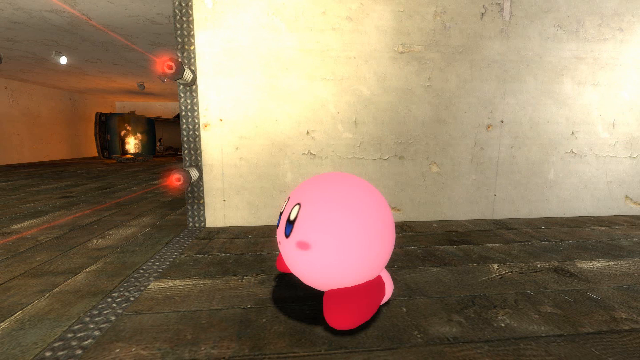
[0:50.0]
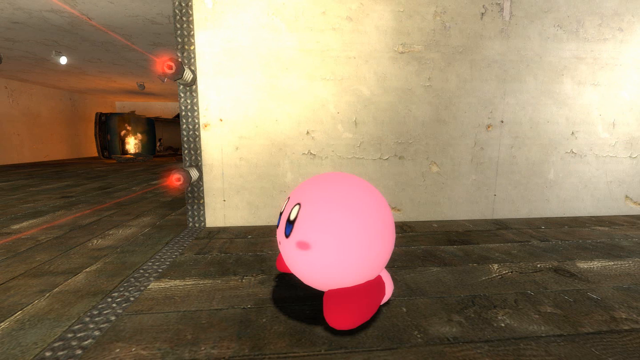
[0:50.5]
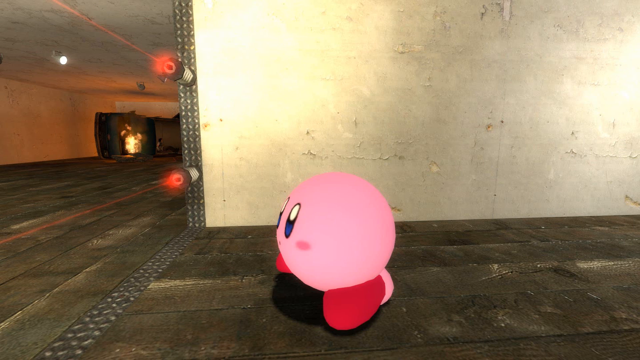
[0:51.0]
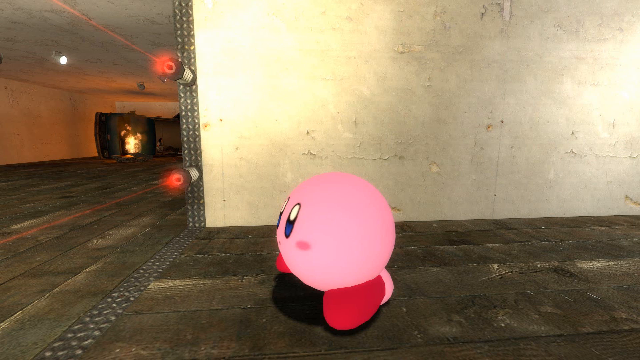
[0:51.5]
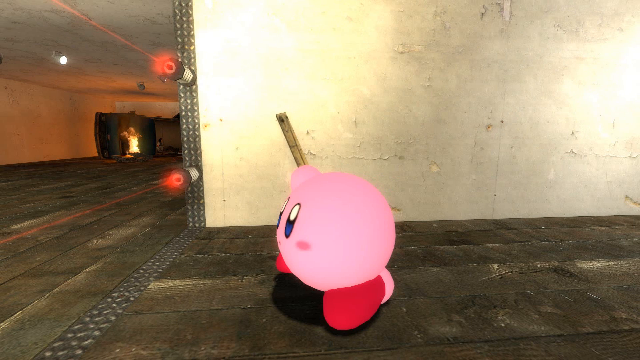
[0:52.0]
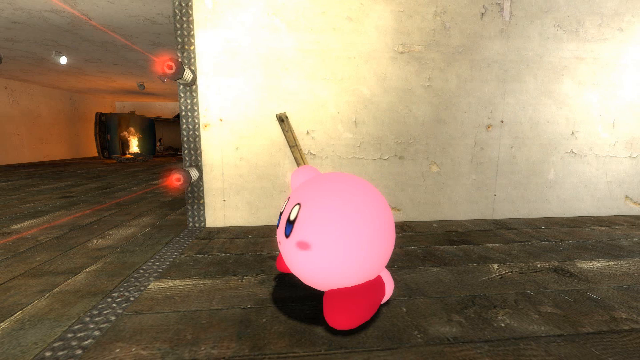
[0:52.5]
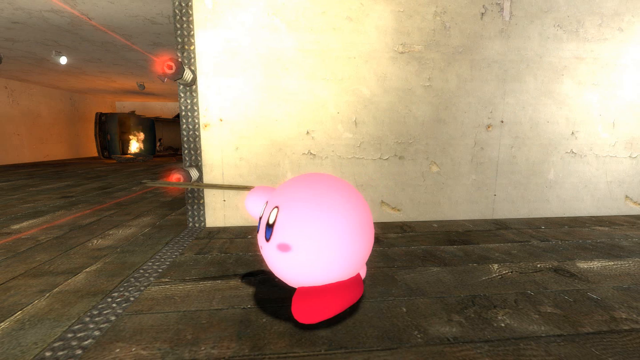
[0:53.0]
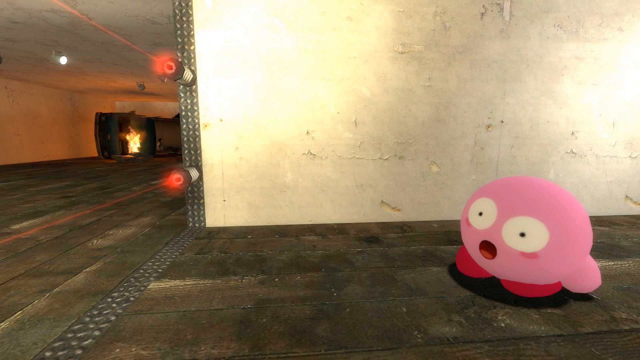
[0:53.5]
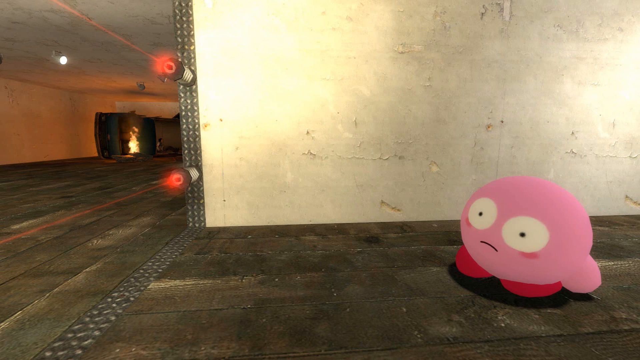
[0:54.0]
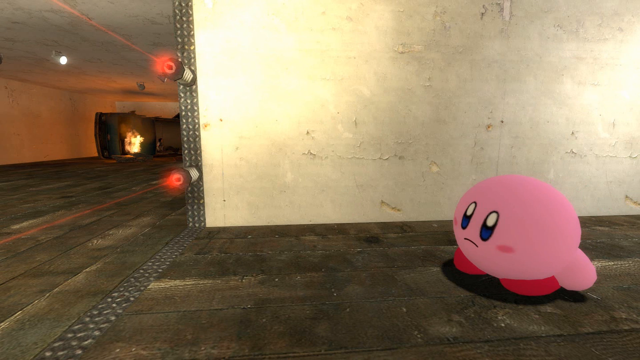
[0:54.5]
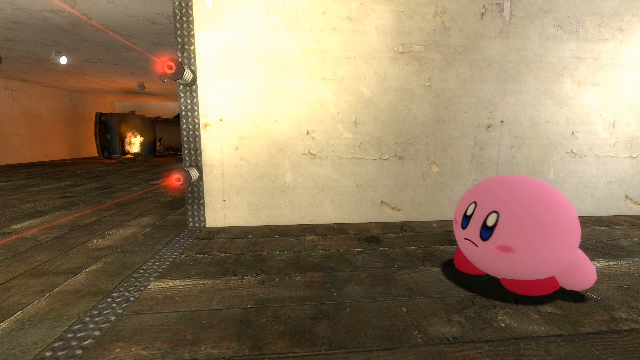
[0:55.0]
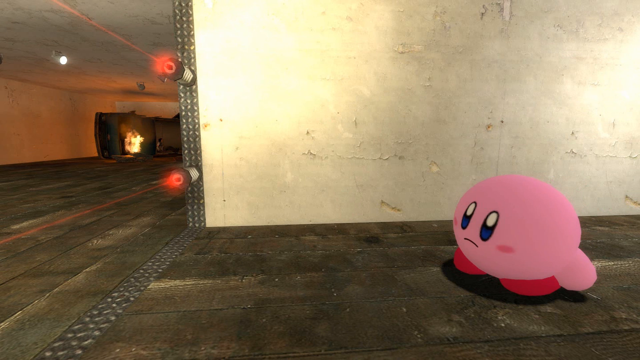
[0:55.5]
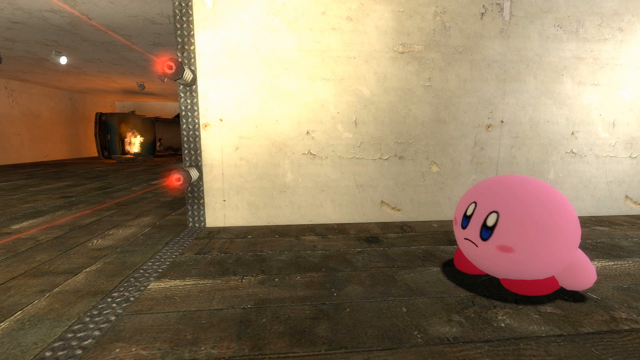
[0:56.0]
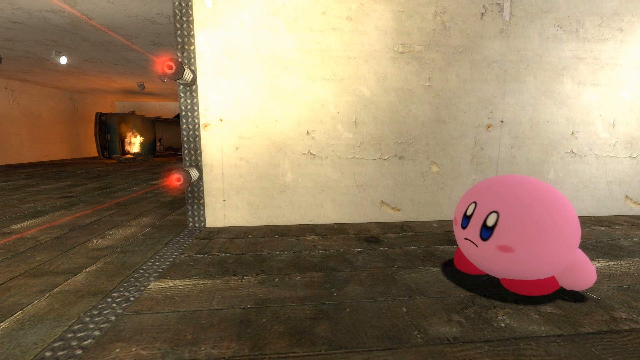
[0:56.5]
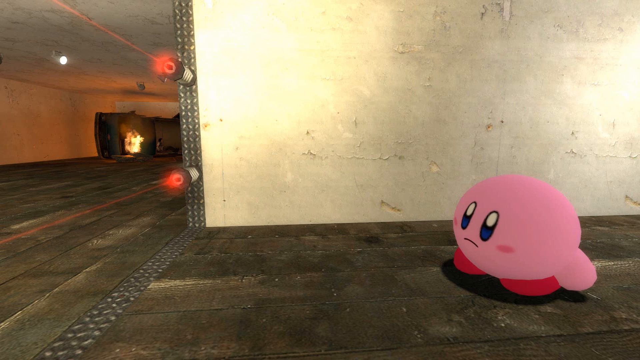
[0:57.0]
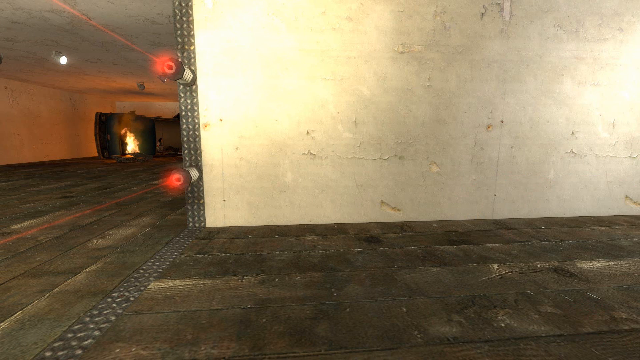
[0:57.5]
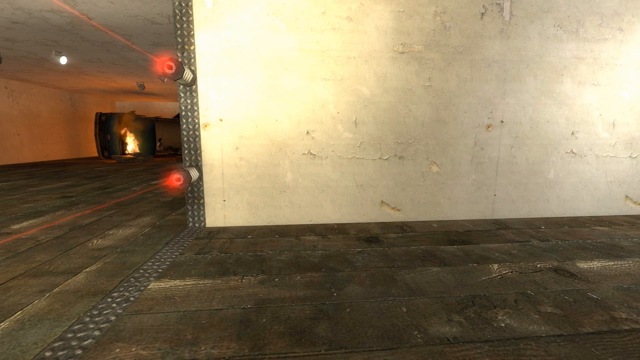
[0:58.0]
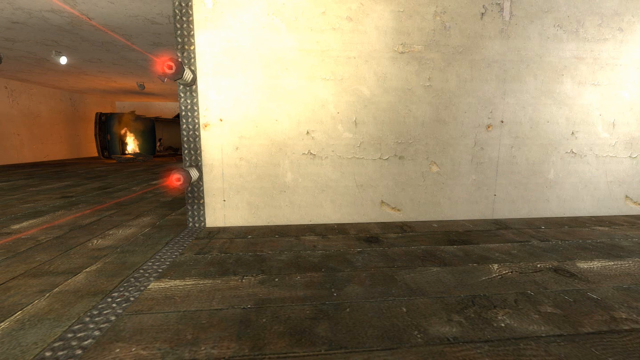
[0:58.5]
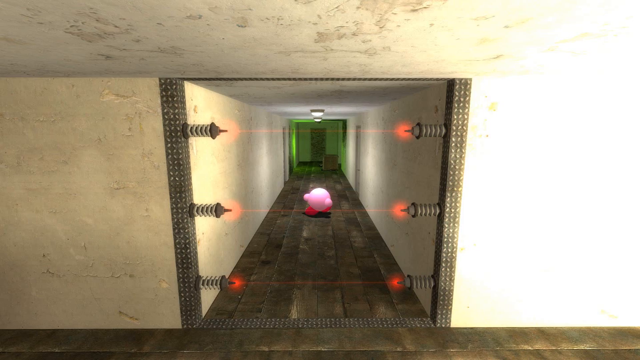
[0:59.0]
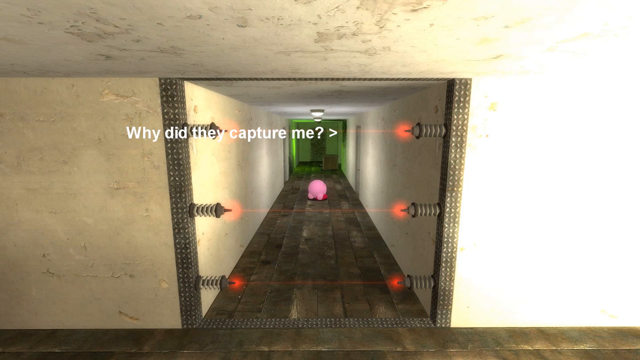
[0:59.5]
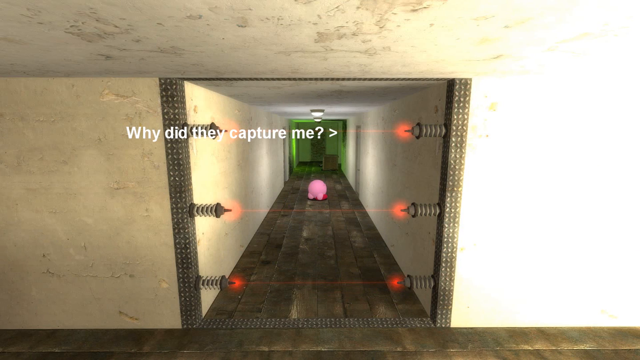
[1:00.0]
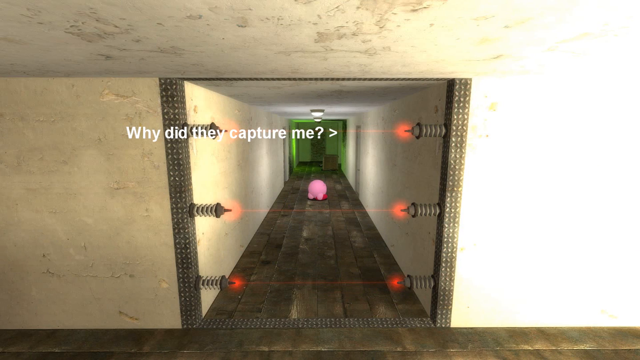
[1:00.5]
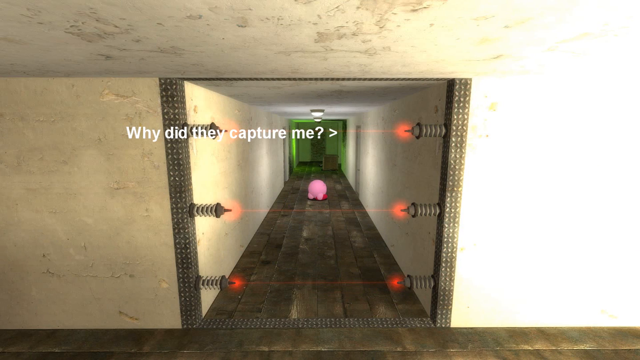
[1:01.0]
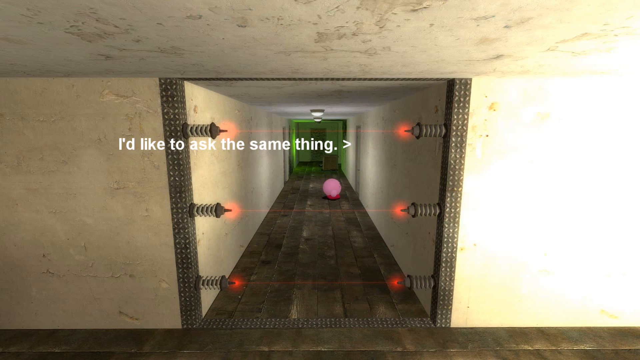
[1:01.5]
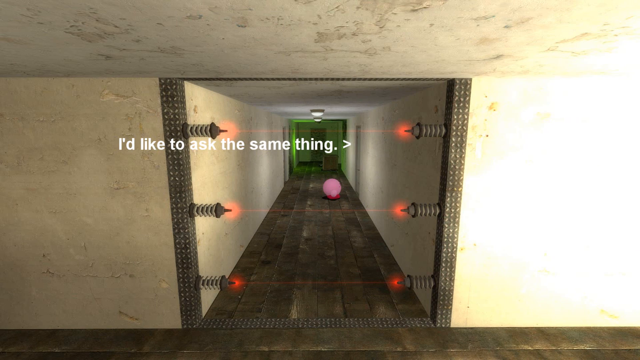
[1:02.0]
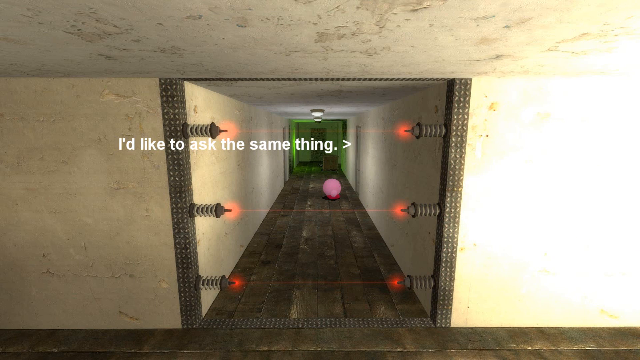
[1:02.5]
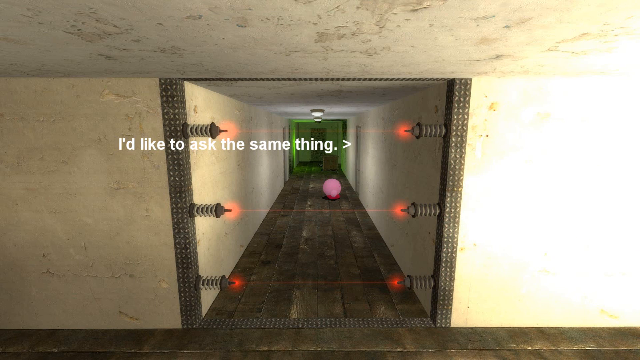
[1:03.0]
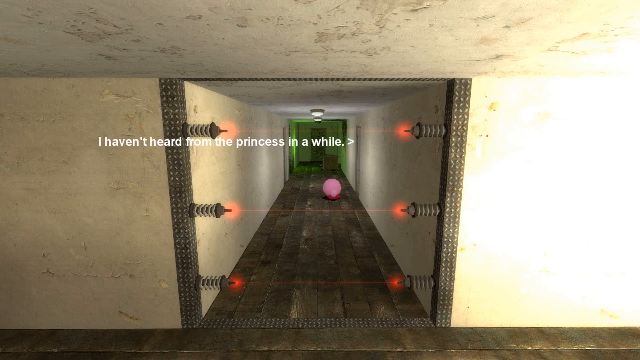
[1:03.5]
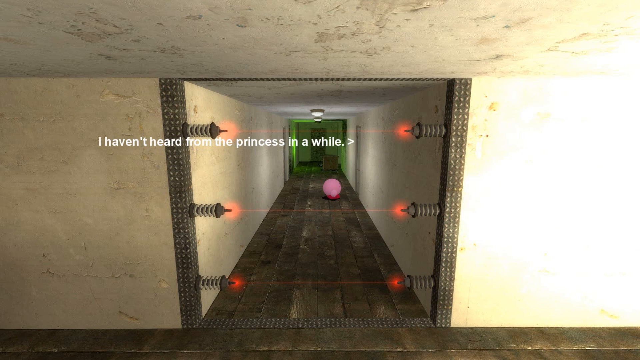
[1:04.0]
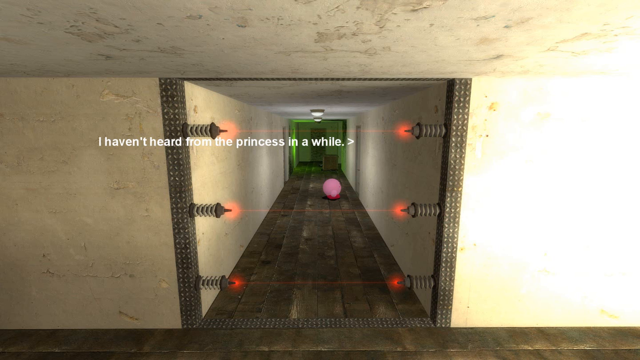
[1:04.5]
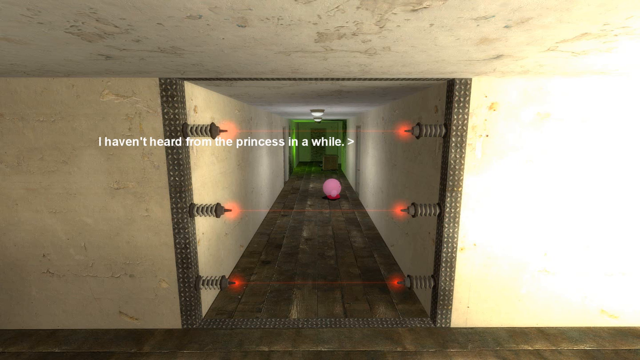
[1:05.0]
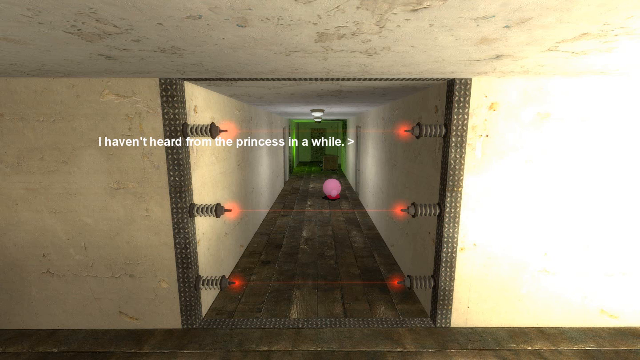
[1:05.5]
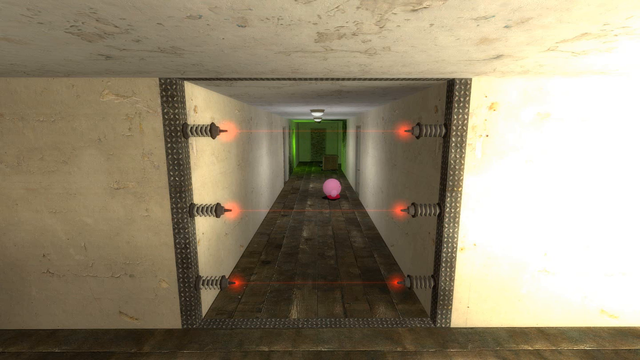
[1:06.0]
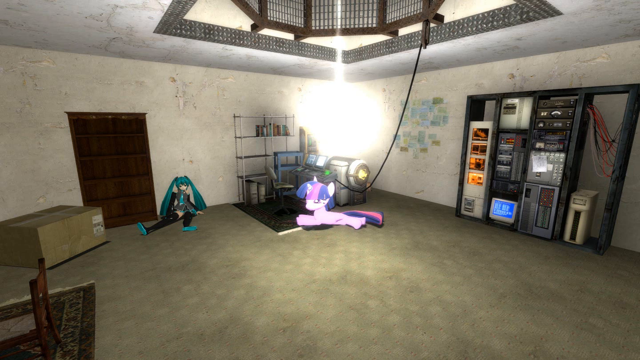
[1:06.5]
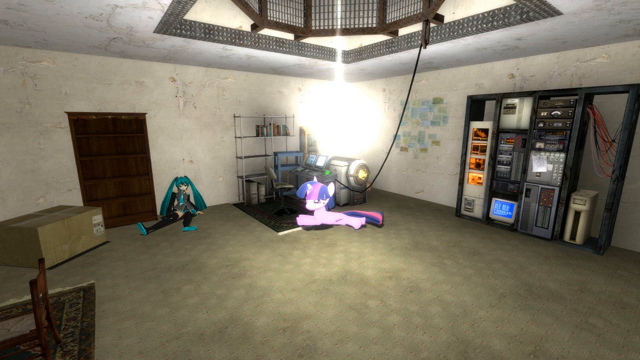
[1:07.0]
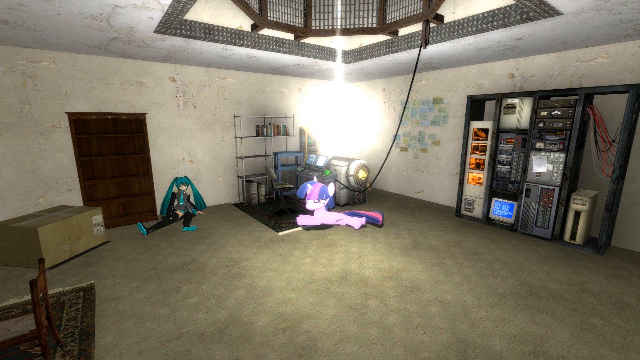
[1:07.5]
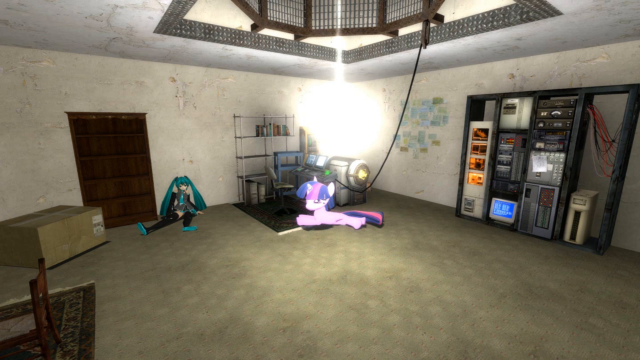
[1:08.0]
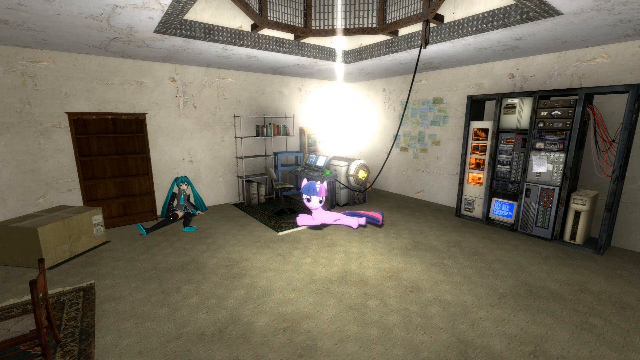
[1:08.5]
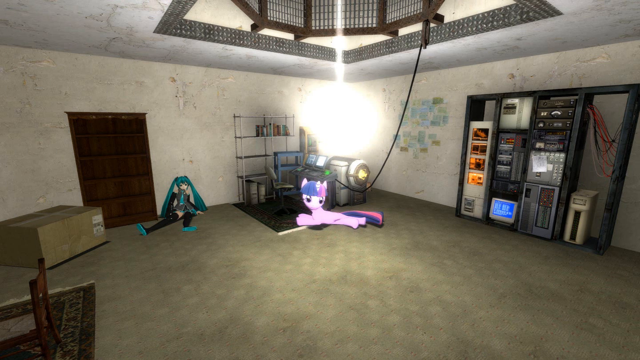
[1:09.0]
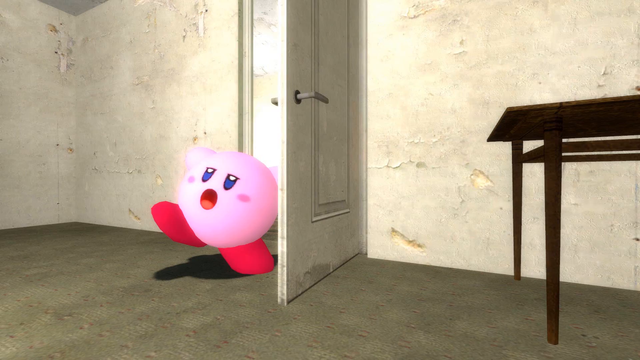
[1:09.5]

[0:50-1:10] The little pink character turns around and runs down the hallway while a caption reads "why did they capture me?" The scene jumps to a different room, which the pink character appears to have come through the door into, and the heading reads "why did they capture me, I'd like to ask the same thing, I haven't heard from the princess in a while". A room shows a pink horse and another character. The pink character runs down the hall, goes through the door and enters the room. The character there might be the princess: she has very long bluey-green pigtails and sits on the floor next to the other character, possibly her horse. A rope-like thing hangs from the ceiling.